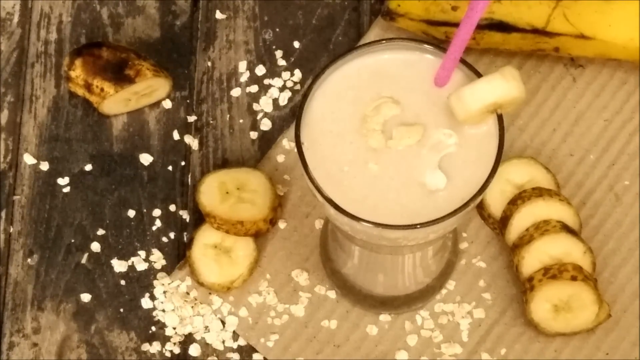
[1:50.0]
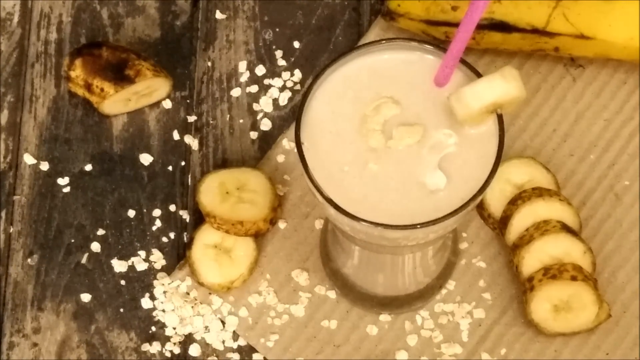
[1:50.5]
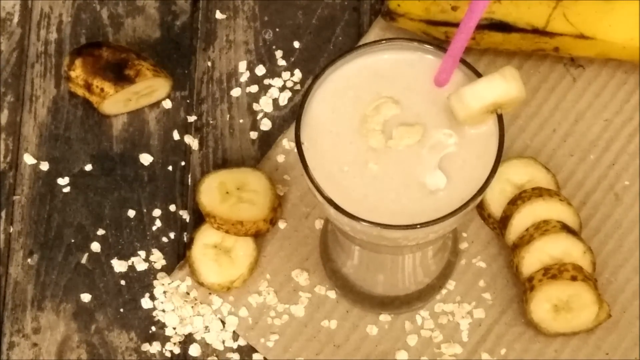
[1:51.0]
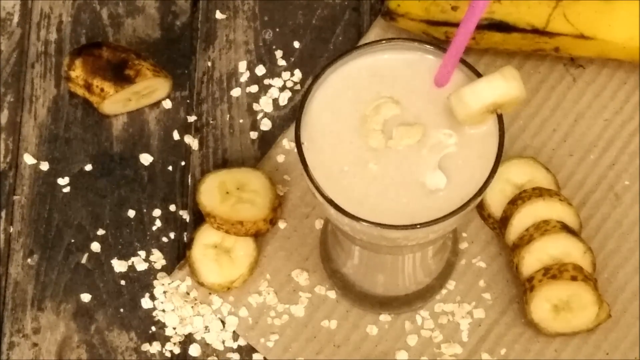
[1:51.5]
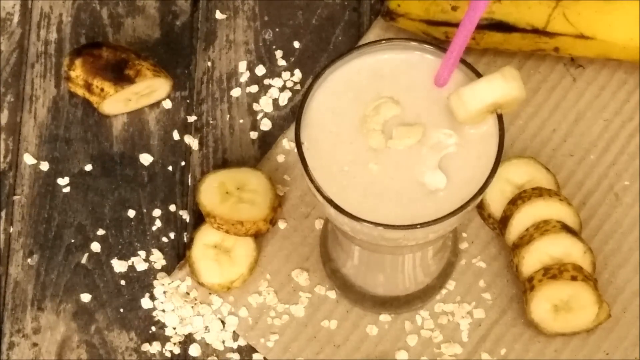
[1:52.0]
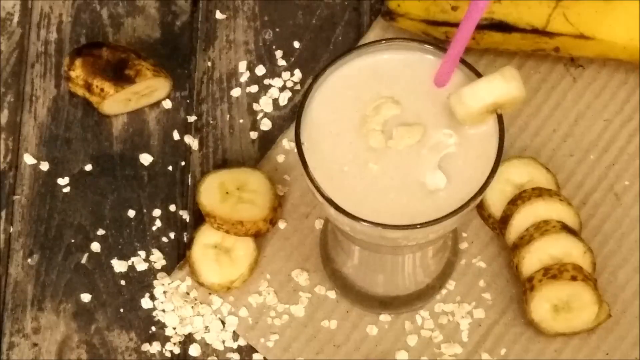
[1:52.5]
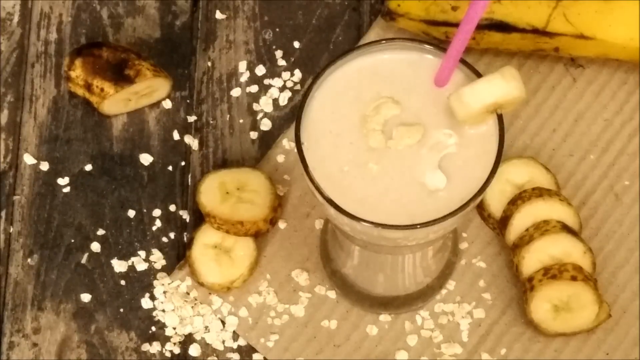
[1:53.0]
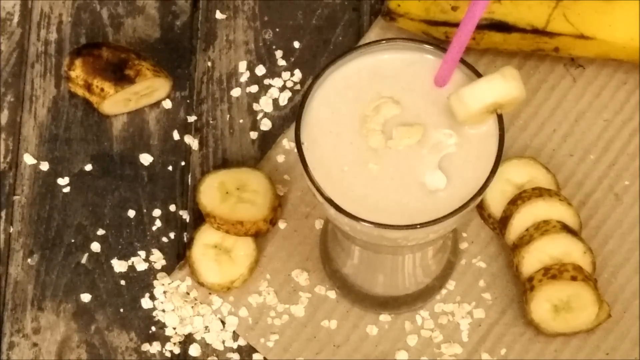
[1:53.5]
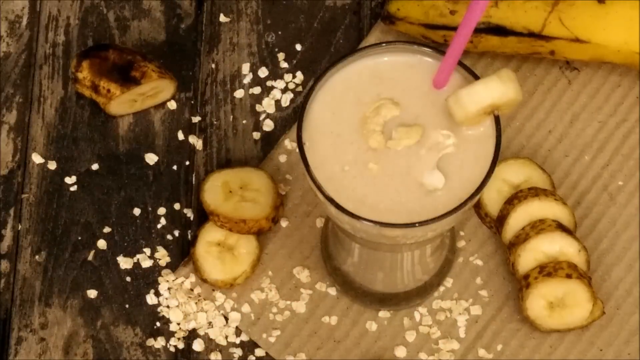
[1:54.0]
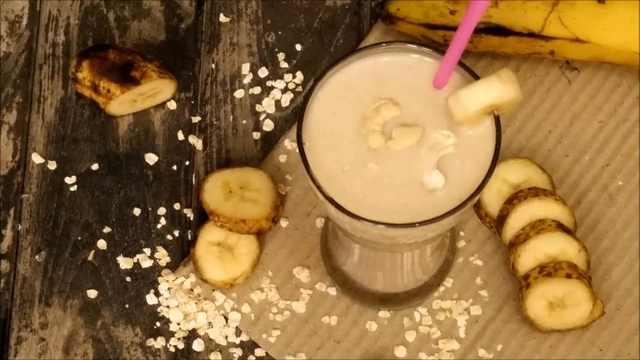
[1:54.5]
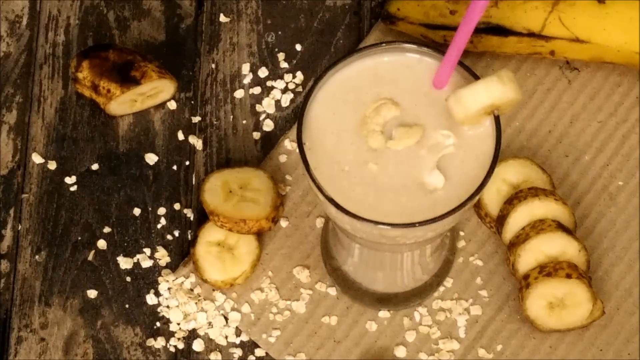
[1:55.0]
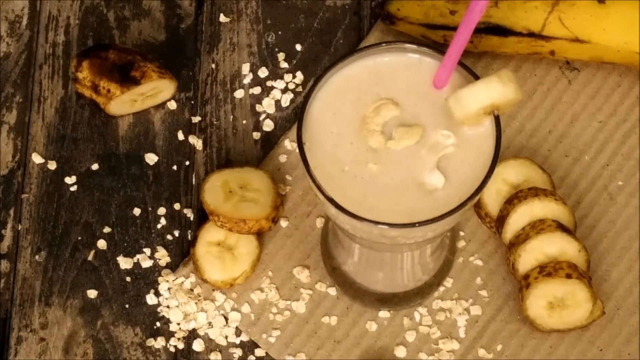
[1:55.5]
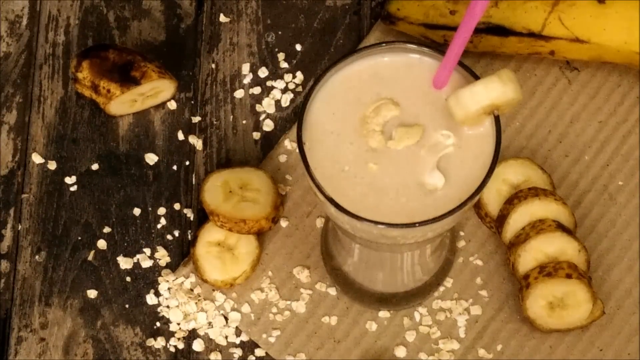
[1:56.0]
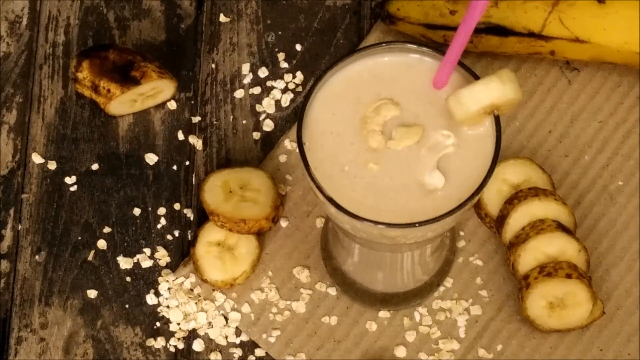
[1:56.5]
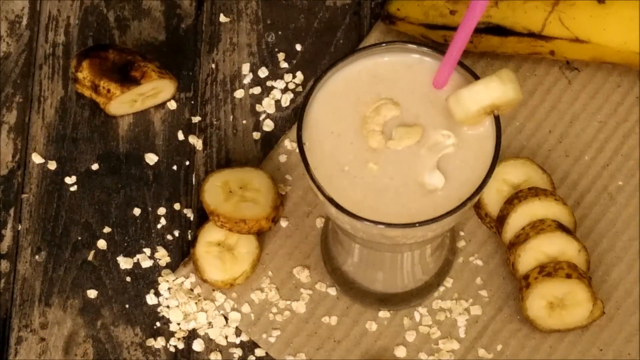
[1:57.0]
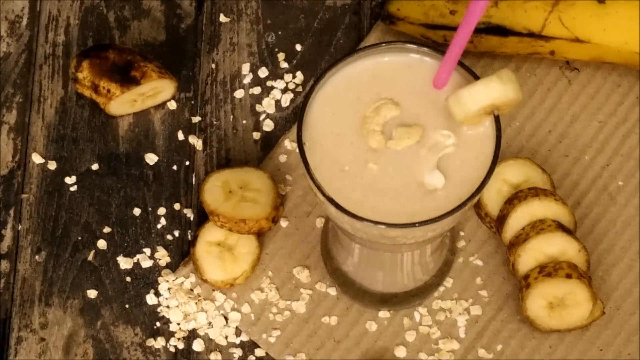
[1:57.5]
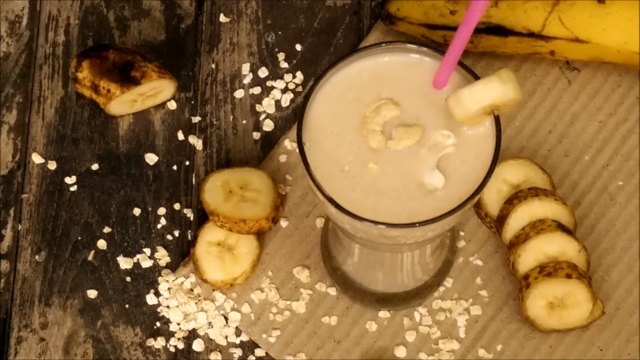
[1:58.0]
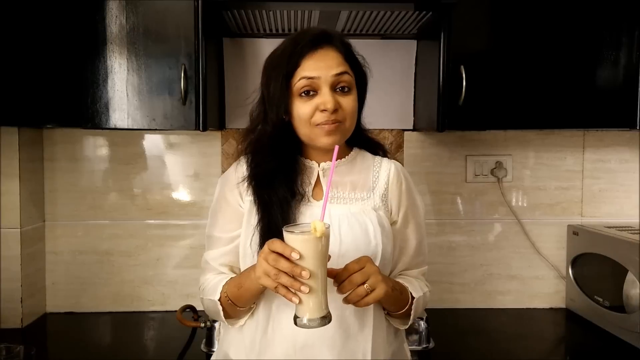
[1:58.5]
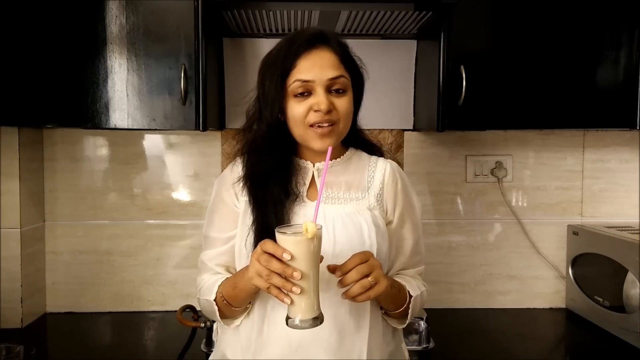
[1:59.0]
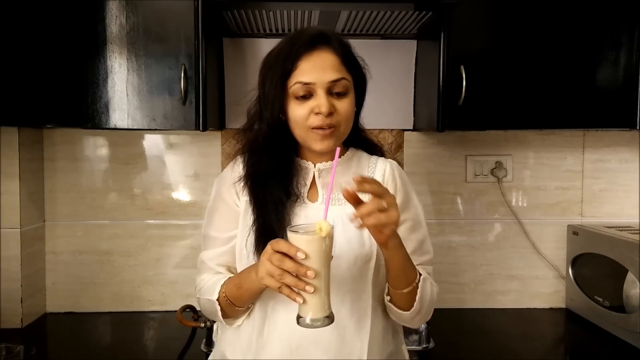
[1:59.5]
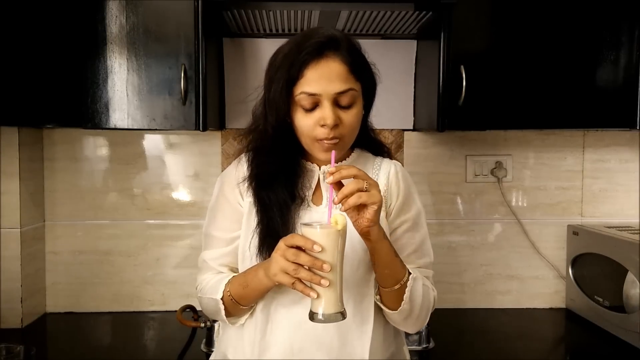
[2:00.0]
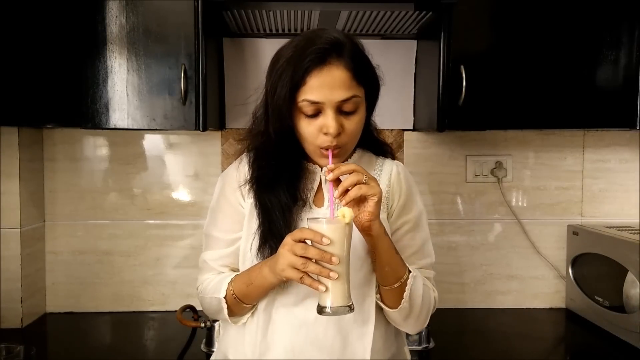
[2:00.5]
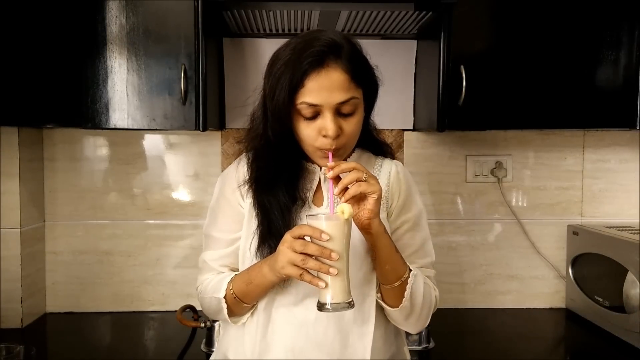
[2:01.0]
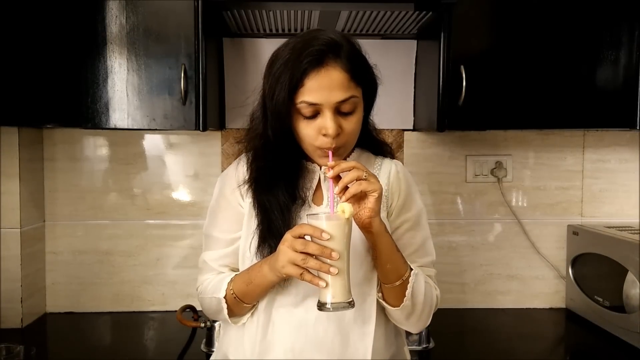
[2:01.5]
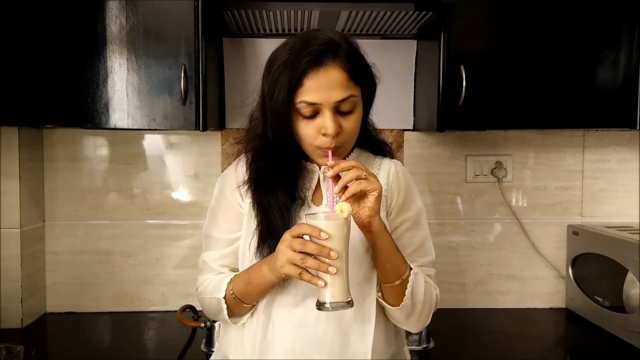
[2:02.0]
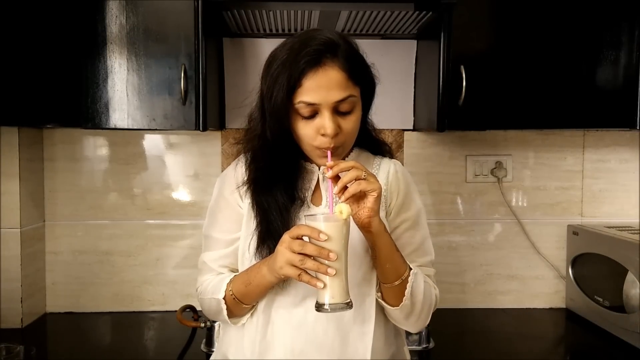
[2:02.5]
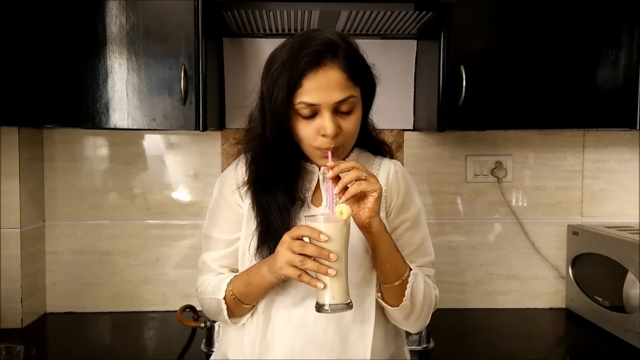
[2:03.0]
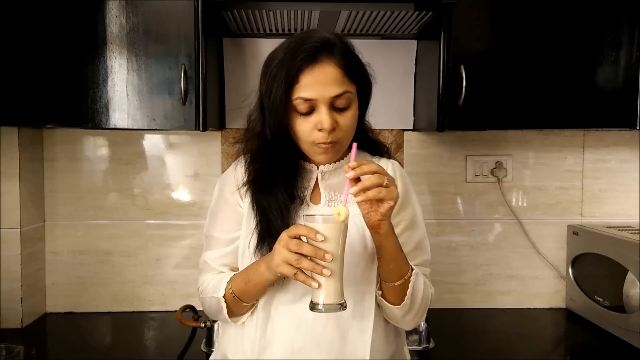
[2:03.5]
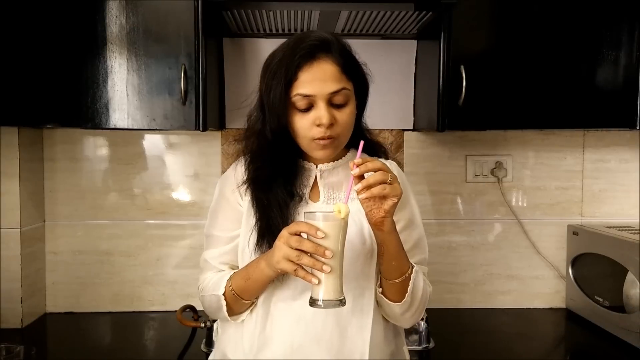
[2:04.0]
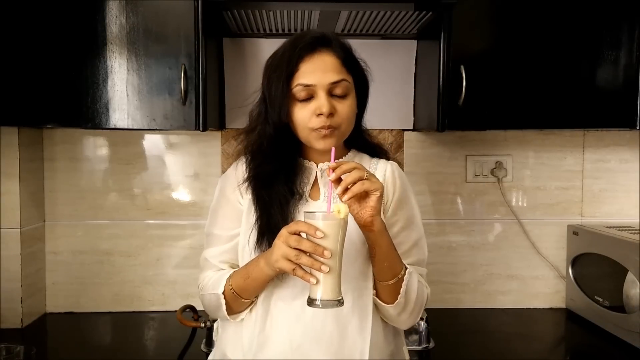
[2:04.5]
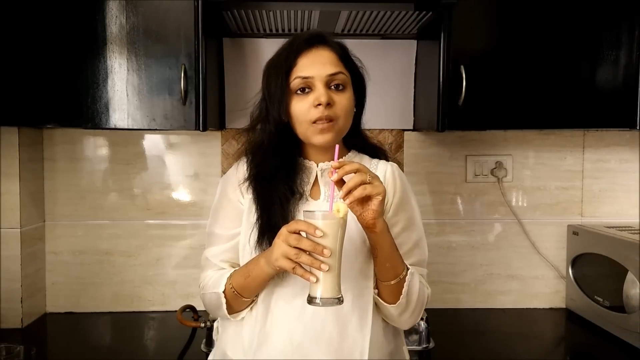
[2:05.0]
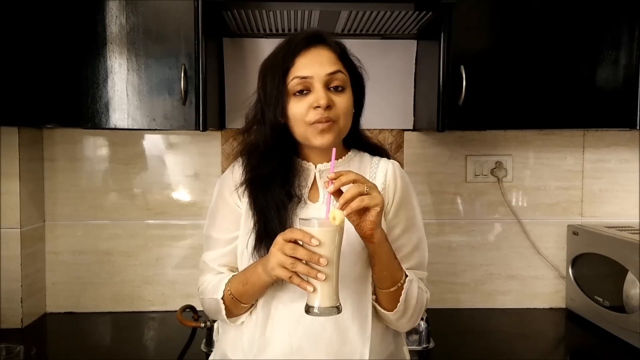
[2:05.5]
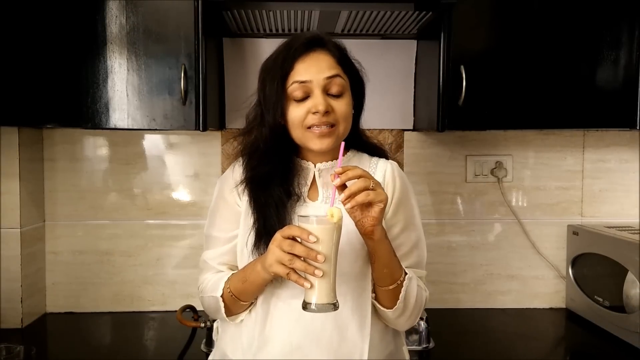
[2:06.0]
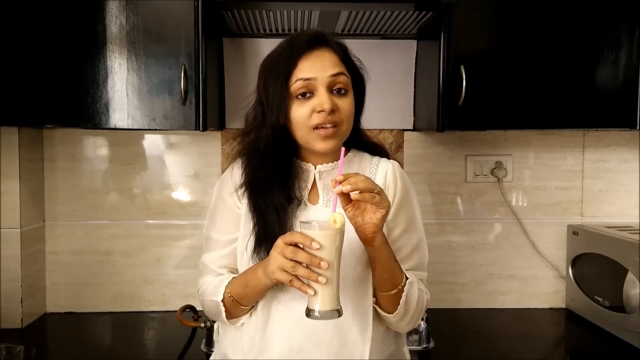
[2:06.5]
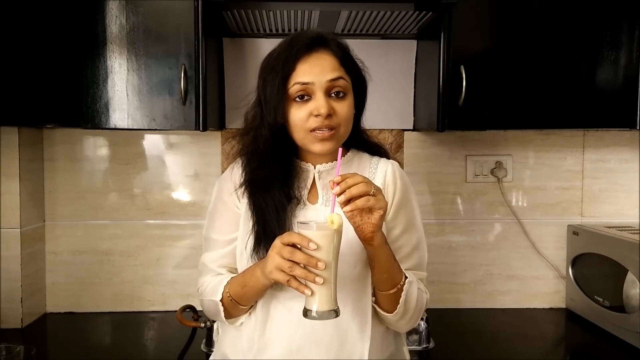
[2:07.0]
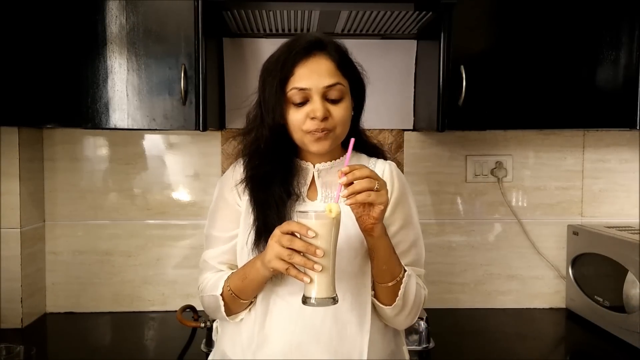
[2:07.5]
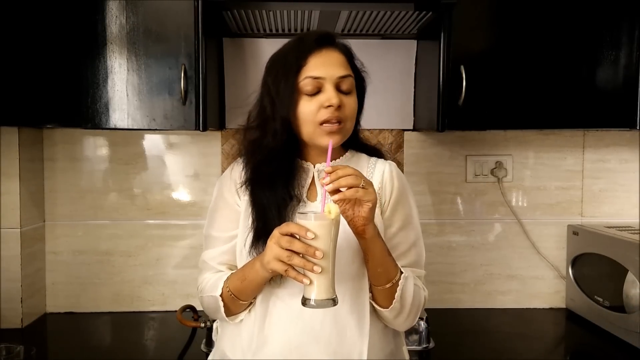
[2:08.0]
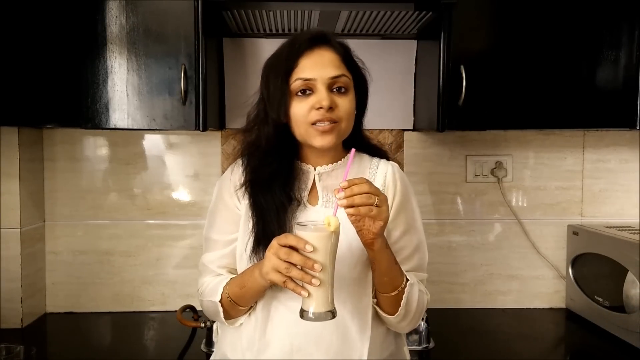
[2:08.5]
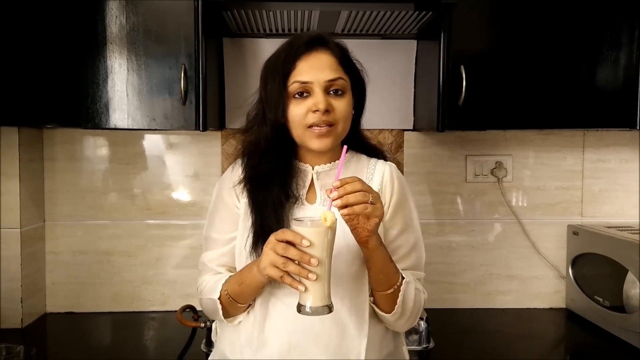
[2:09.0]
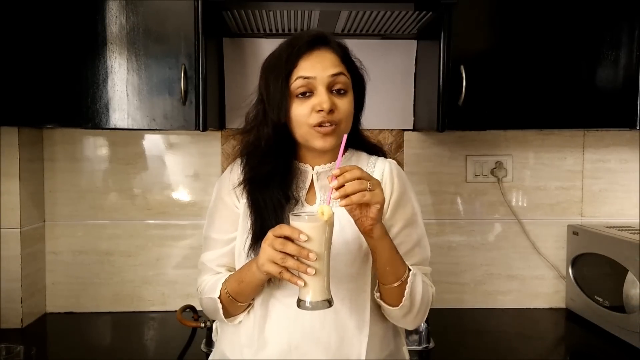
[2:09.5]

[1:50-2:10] A glass holds what seems to be a white liquid, maybe a milkshake, with pieces of banana inside and something else floating around, maybe ice. It has a pink straw. On the chopping board are some pieces of cut-up banana and another banana that has not been cut up, on what looks like a wood-grain-effect kitchen top. A woman then stands in a kitchen wearing a white dress, with long black hair and two bangles, one on each wrist, holding the same milkshake with a banana piece and a pink straw. Behind her are black cabinets and clear white glass tiles. She takes a sip of the milkshake through the pink straw, tastes it, looks at the camera and speaks.